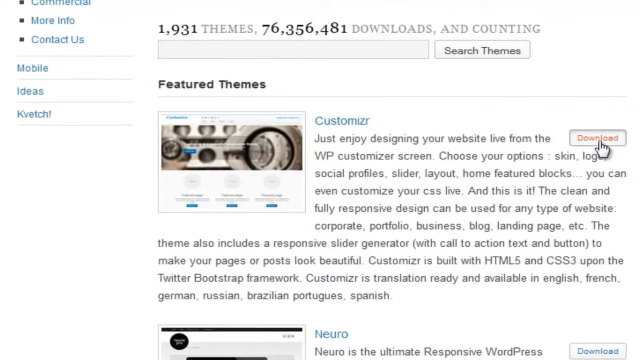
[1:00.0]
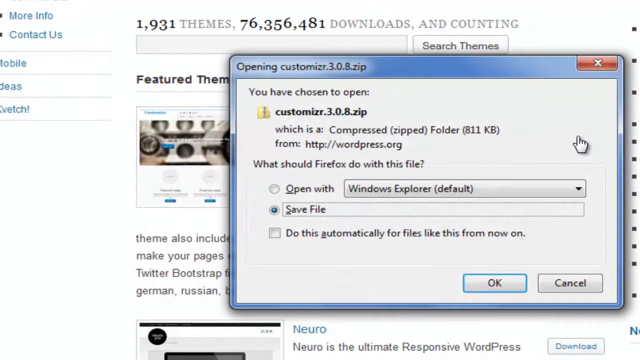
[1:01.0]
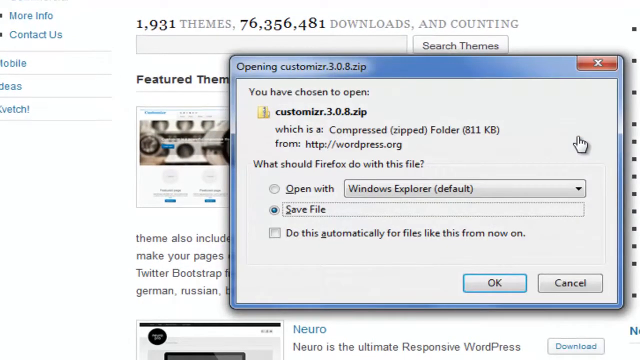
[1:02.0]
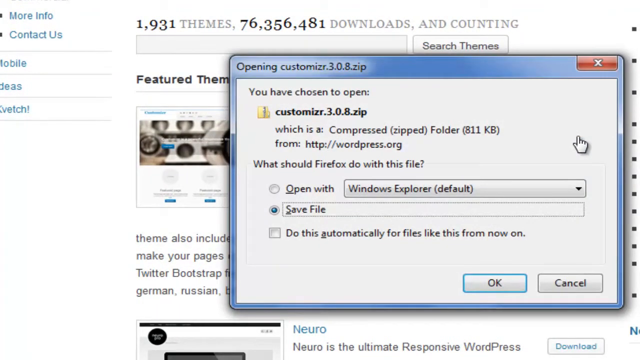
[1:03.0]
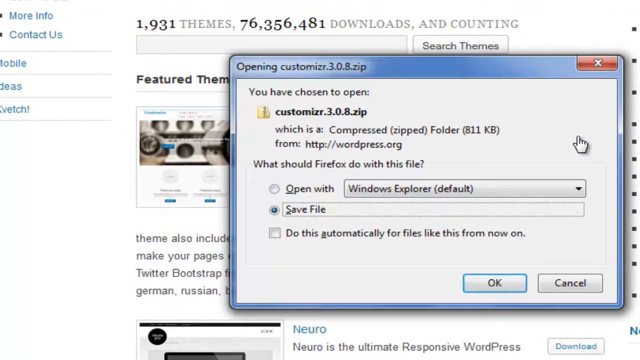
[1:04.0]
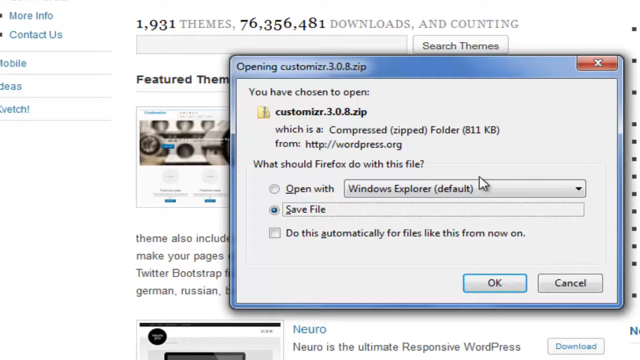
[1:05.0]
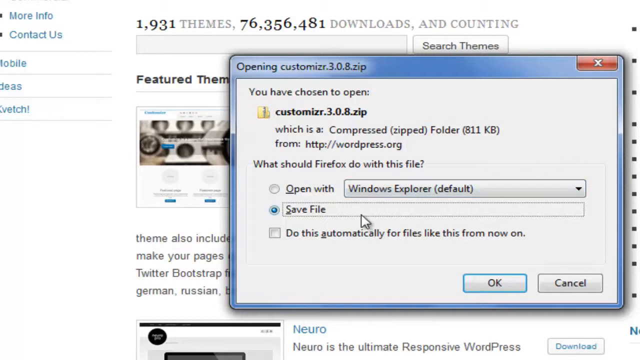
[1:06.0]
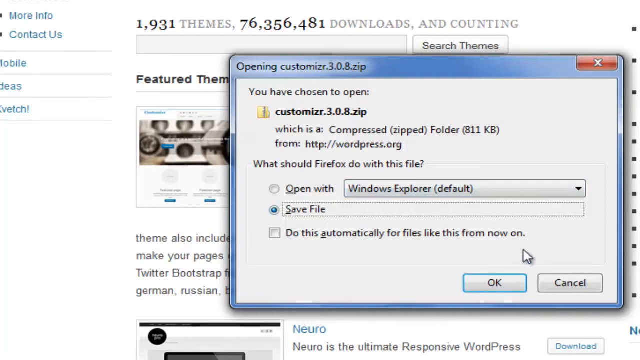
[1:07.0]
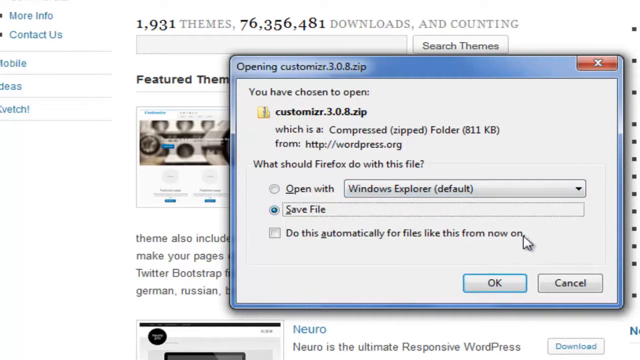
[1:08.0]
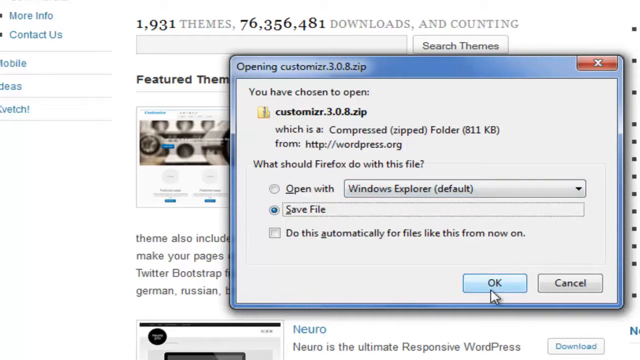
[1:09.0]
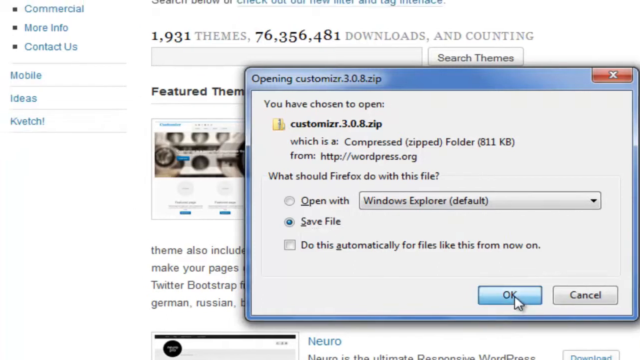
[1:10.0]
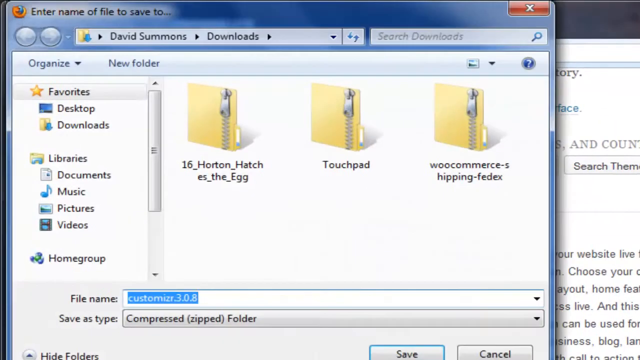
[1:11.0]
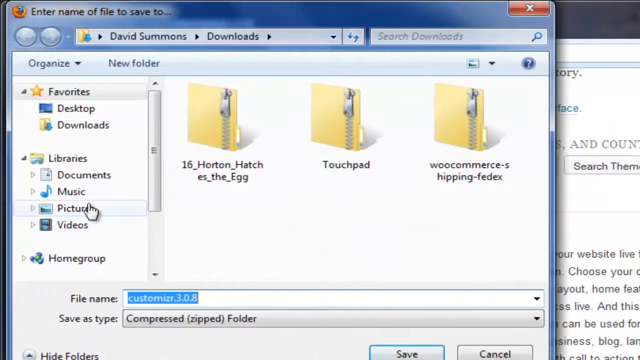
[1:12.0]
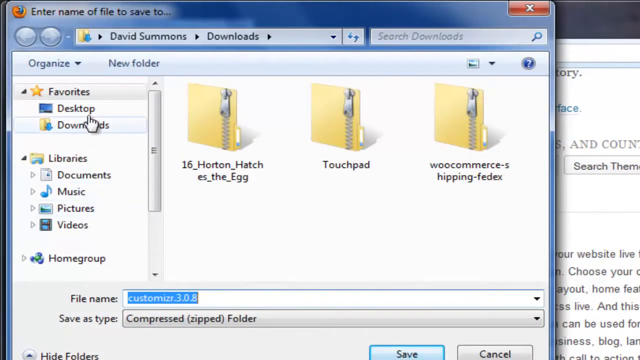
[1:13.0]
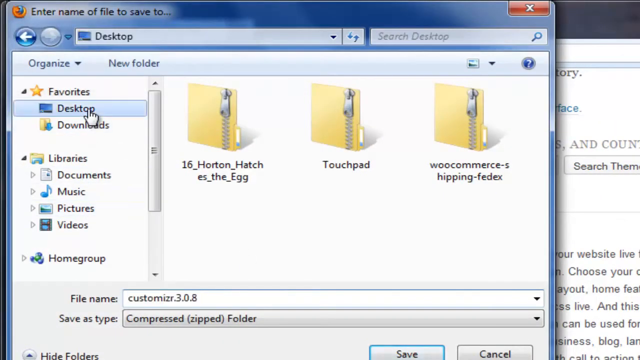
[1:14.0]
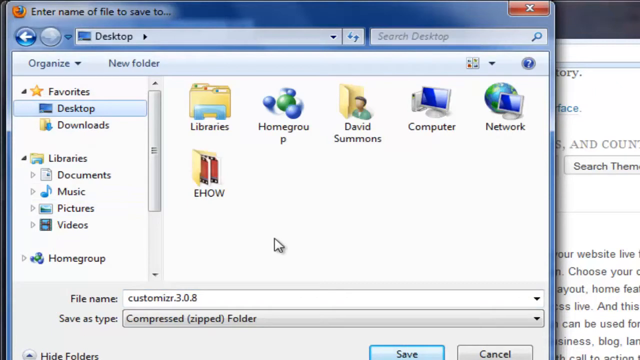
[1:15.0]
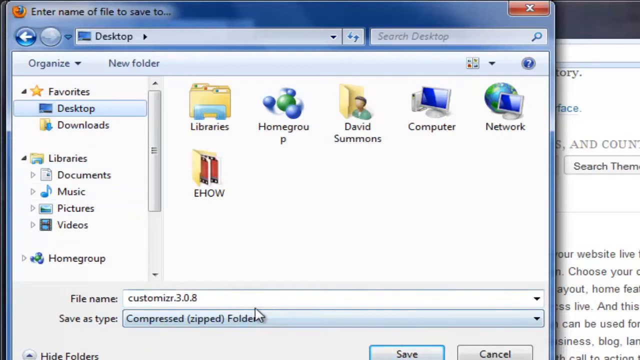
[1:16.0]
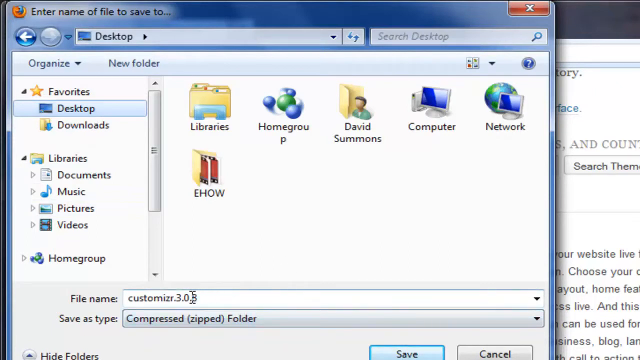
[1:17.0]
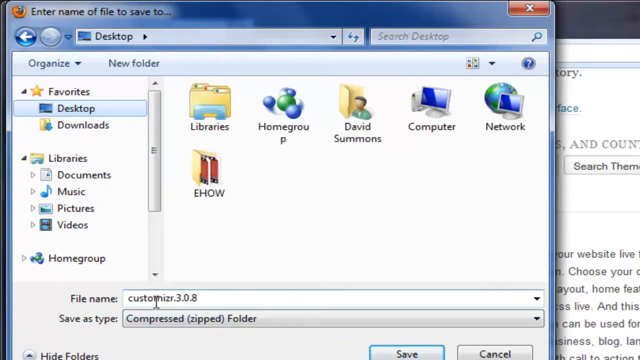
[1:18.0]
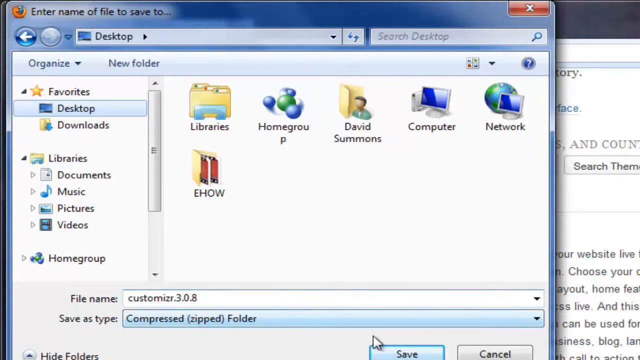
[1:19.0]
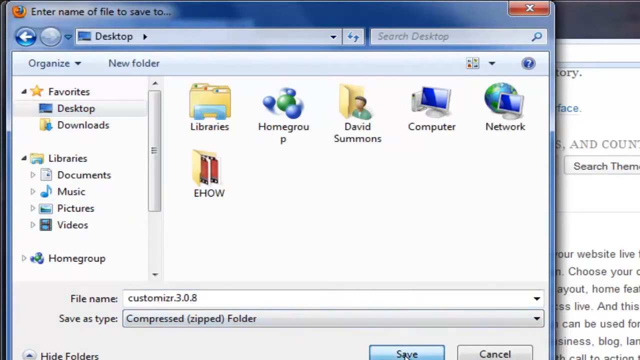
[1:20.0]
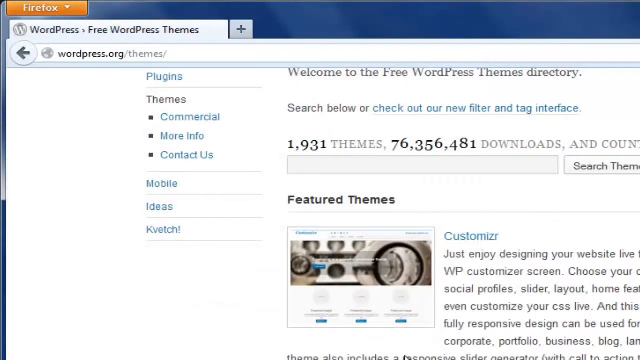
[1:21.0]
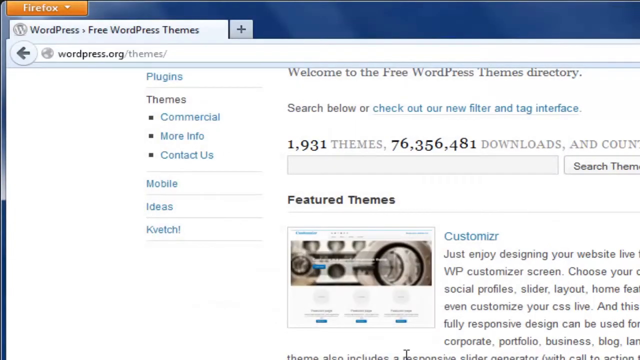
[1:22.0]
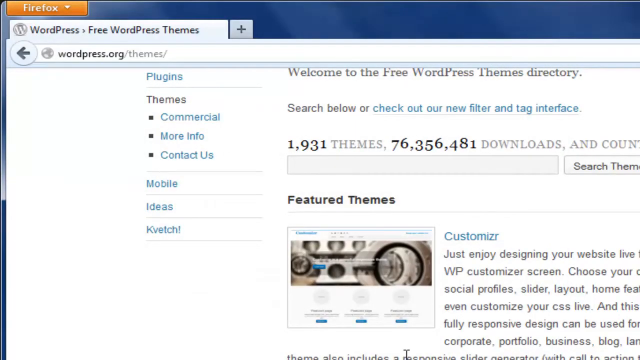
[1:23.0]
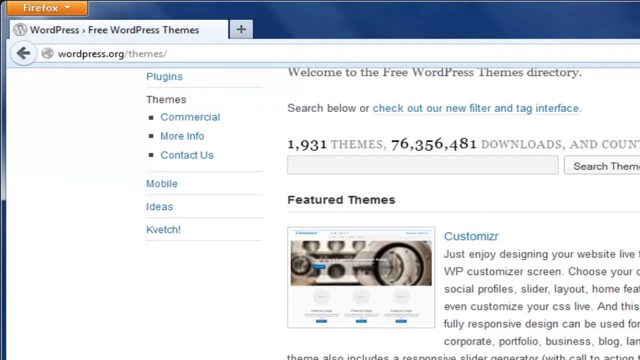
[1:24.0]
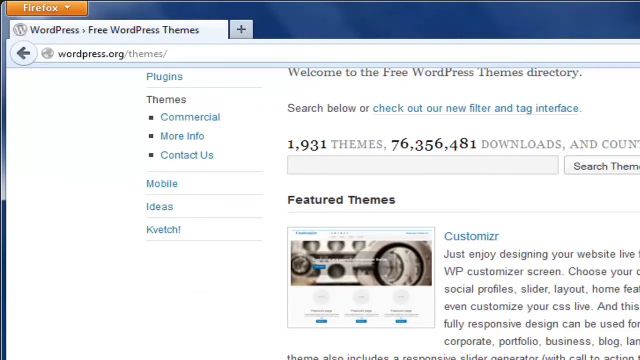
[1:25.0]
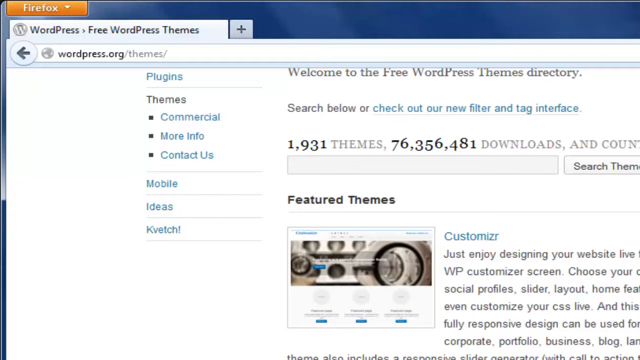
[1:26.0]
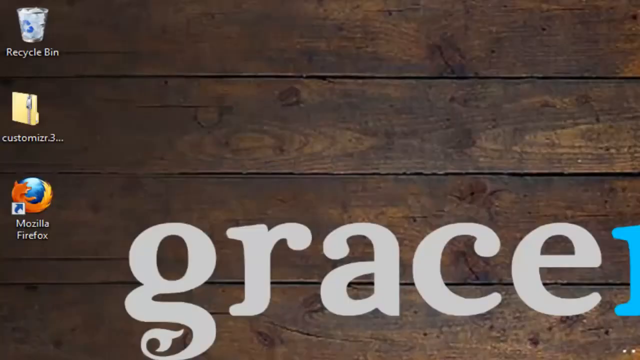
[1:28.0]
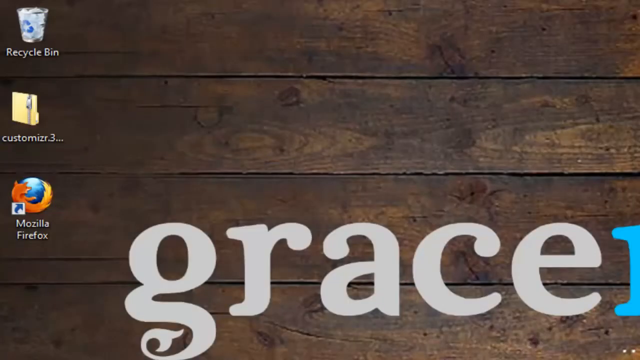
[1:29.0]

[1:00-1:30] Windows Explorer is being searched, and an option to set something as default appears. On the desktop, options to search, customize and save are shown, along with featured themes that can be customized. WordPress.com is reached, and Firefox is possibly shown as well.